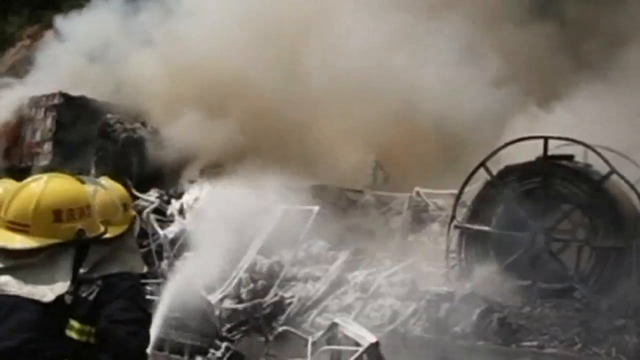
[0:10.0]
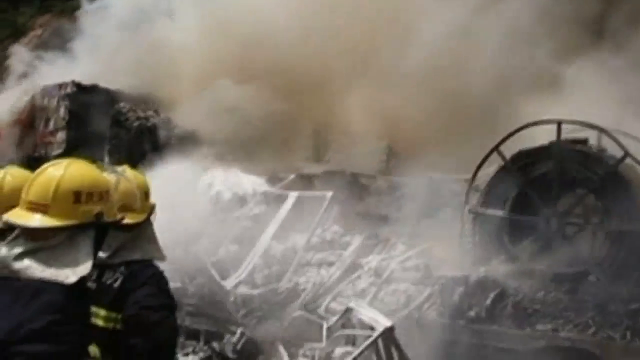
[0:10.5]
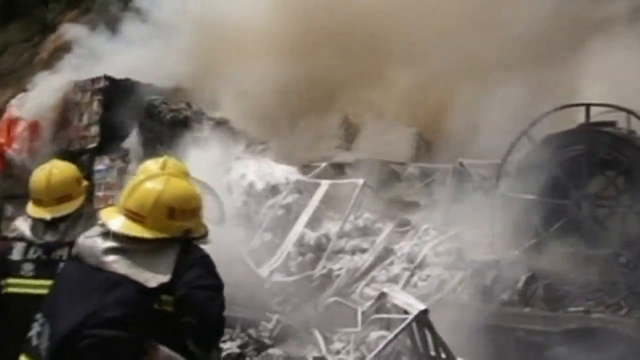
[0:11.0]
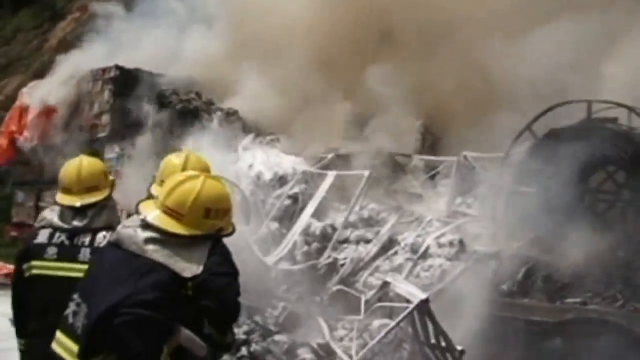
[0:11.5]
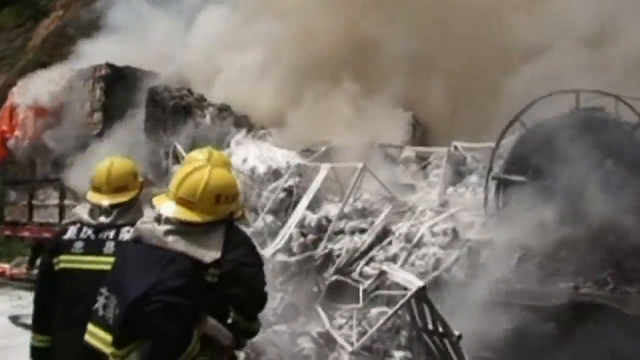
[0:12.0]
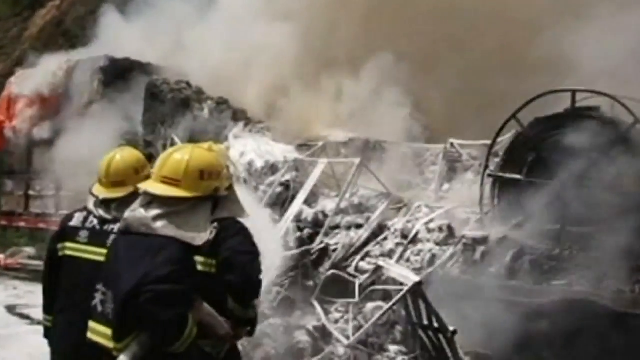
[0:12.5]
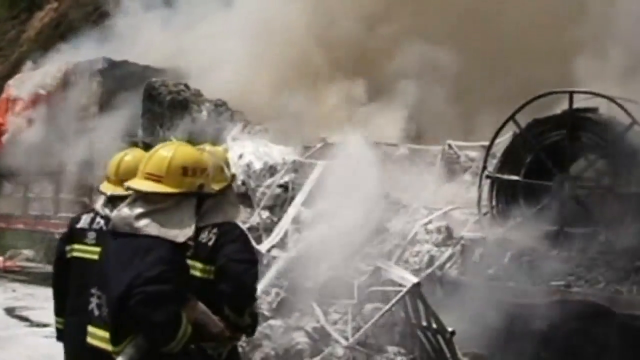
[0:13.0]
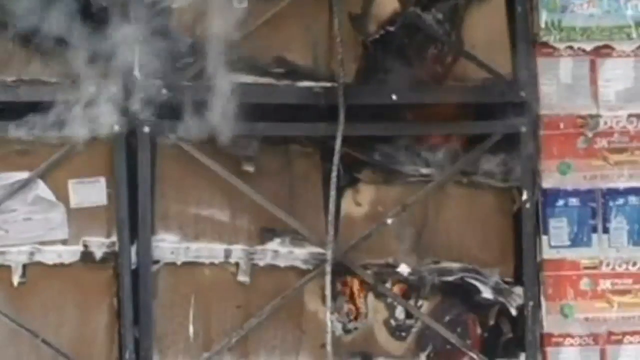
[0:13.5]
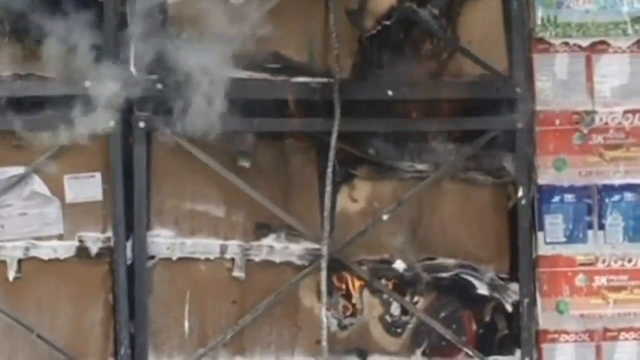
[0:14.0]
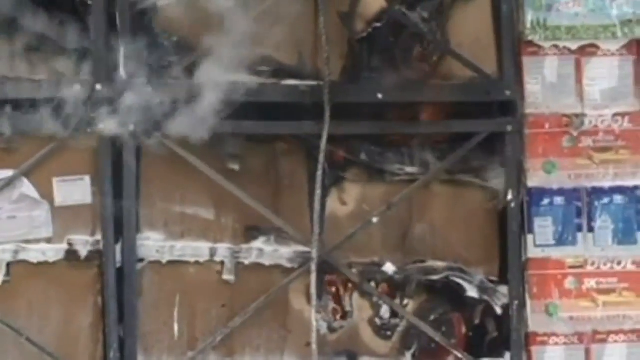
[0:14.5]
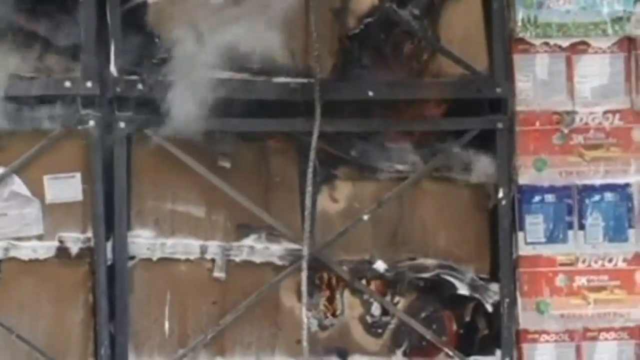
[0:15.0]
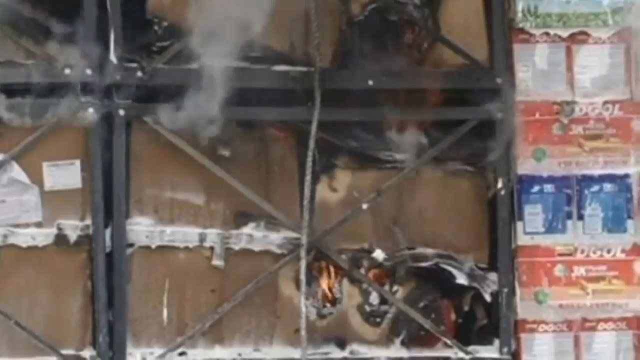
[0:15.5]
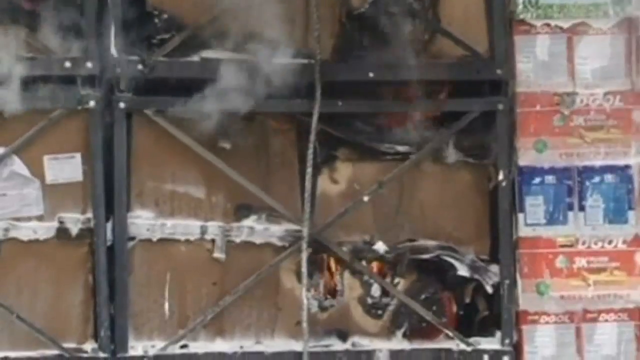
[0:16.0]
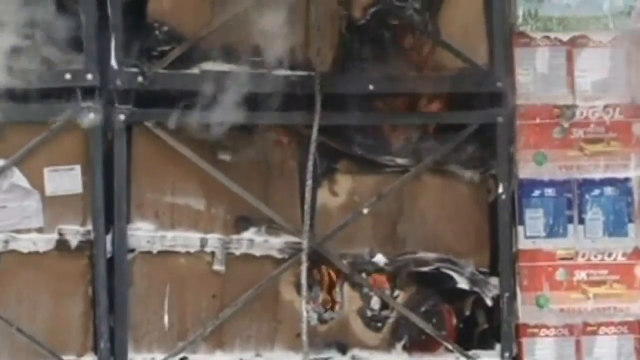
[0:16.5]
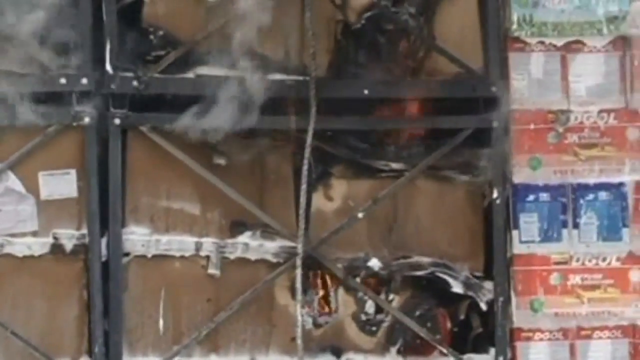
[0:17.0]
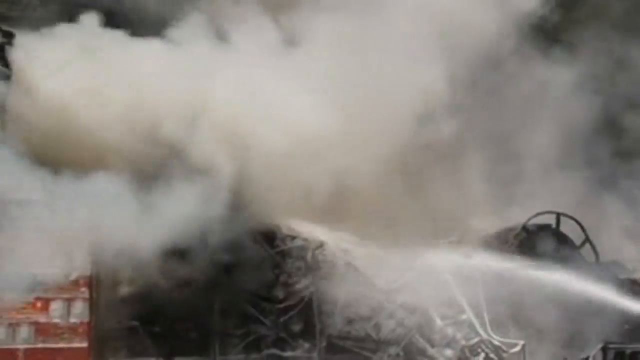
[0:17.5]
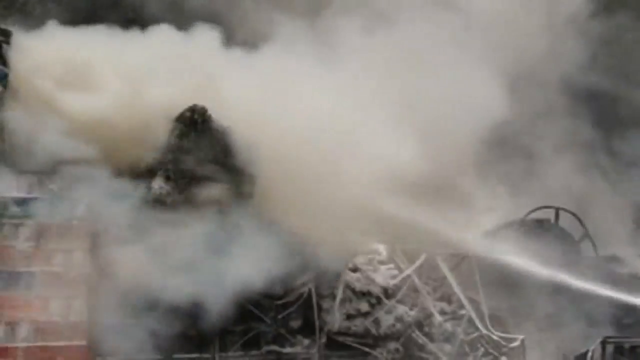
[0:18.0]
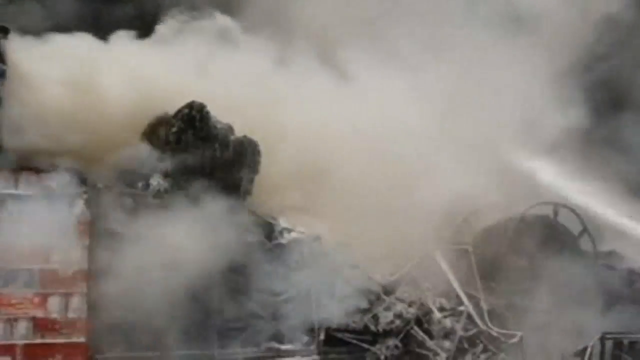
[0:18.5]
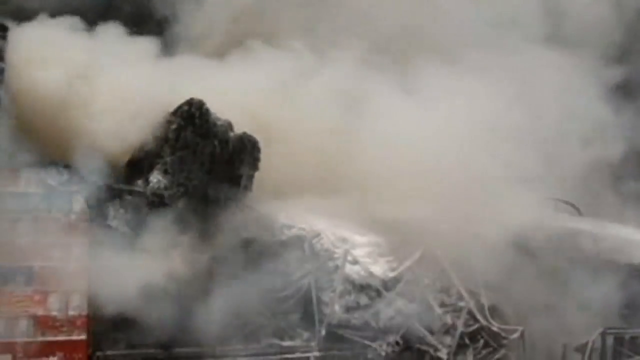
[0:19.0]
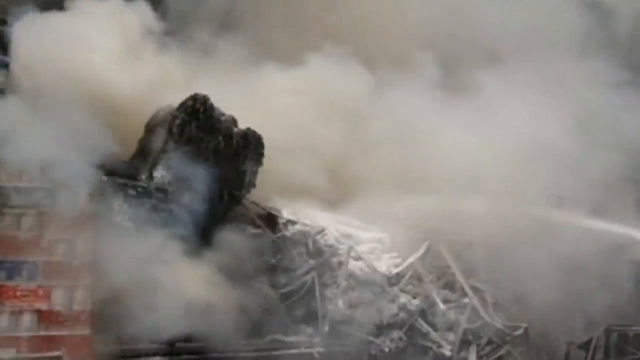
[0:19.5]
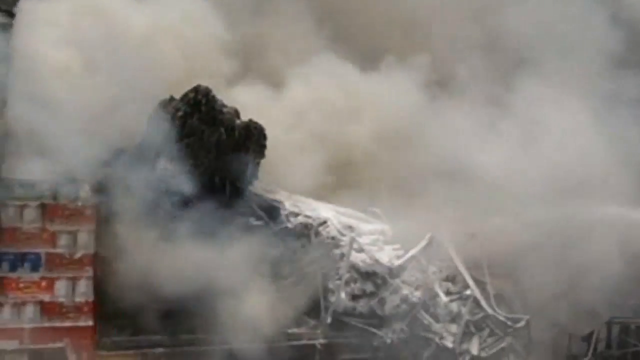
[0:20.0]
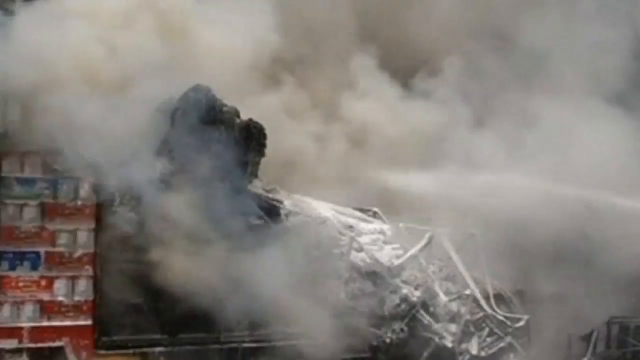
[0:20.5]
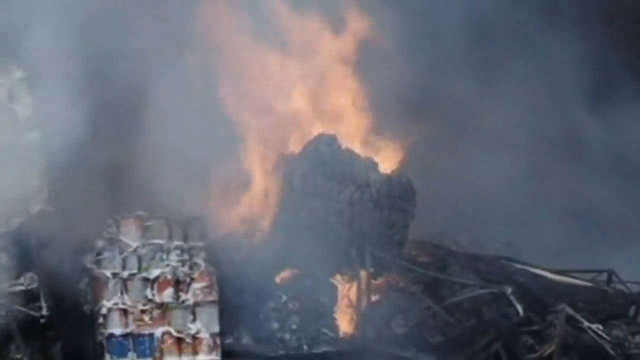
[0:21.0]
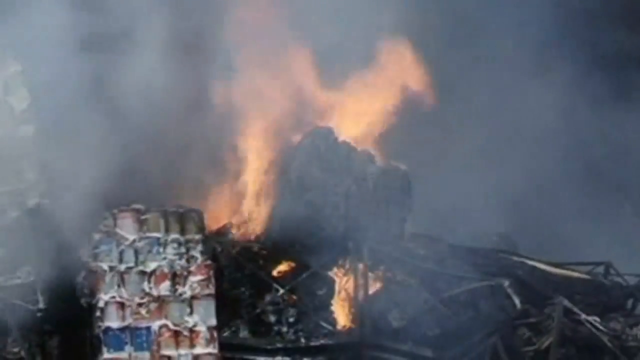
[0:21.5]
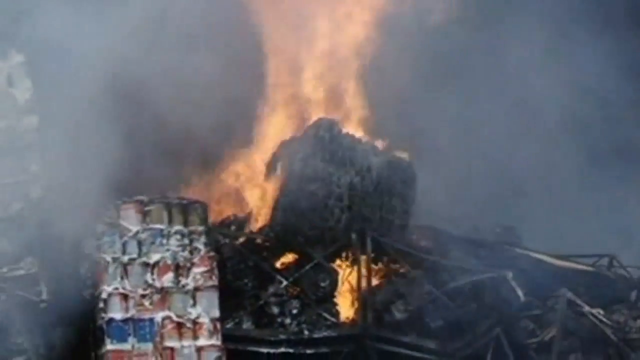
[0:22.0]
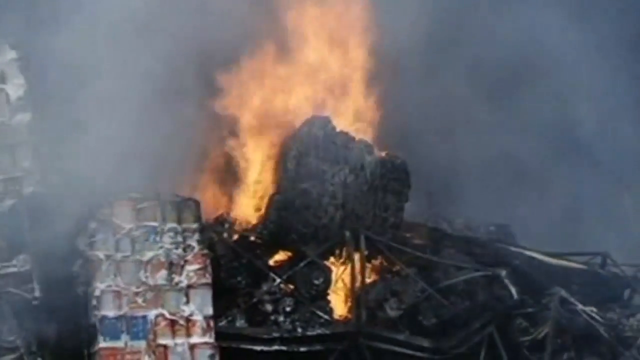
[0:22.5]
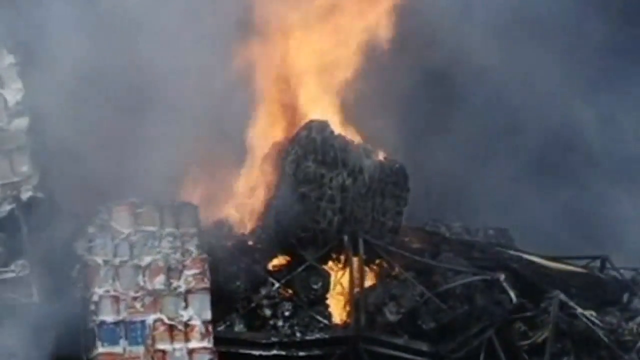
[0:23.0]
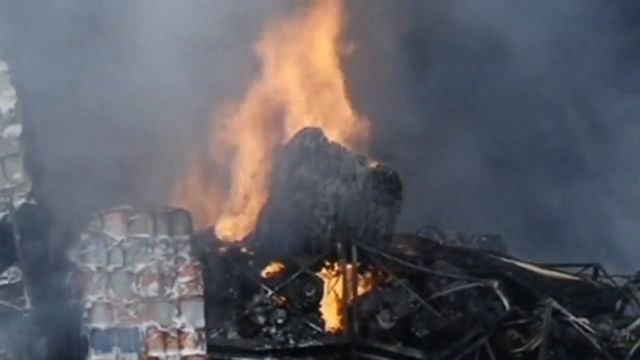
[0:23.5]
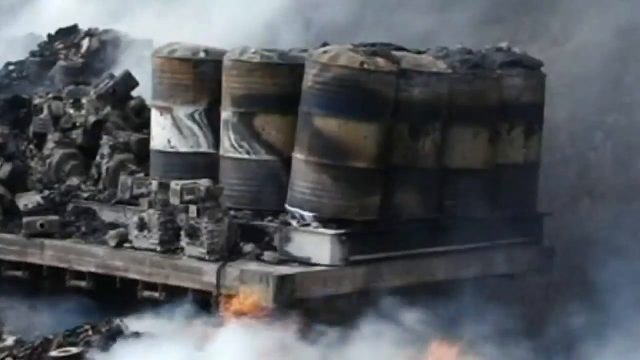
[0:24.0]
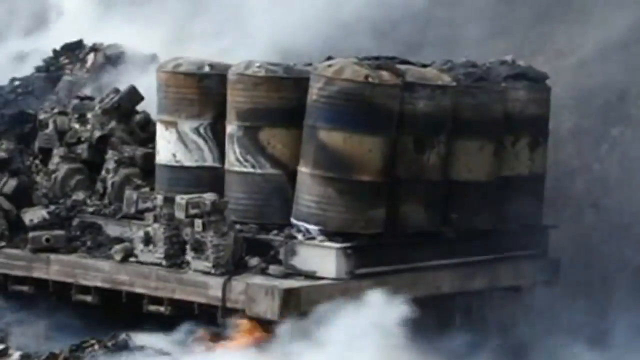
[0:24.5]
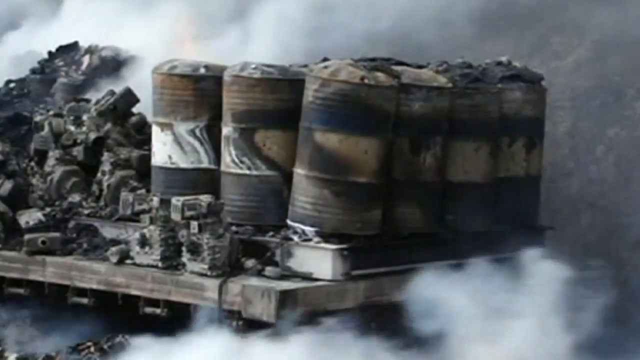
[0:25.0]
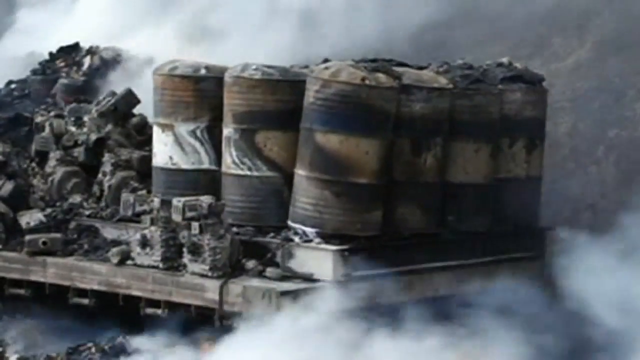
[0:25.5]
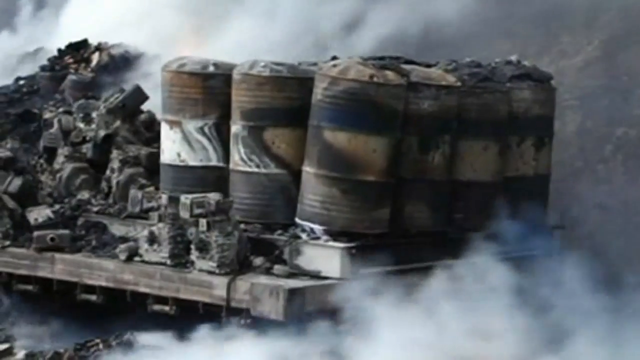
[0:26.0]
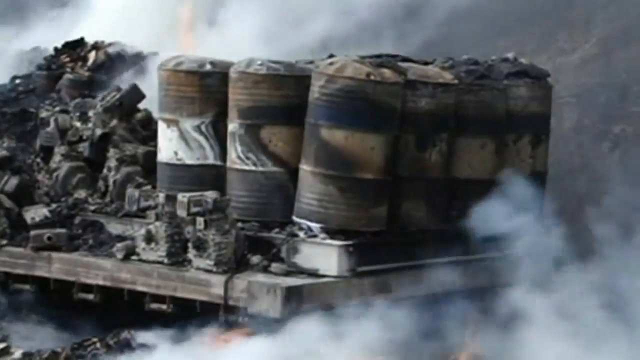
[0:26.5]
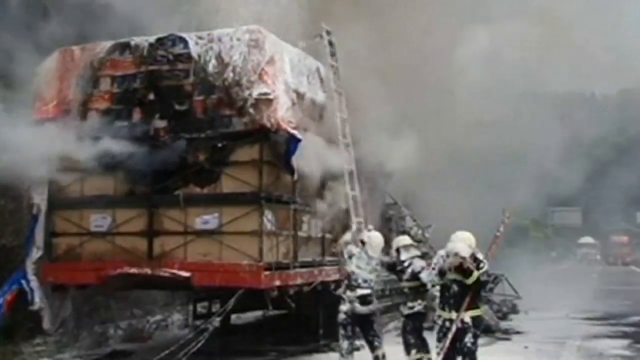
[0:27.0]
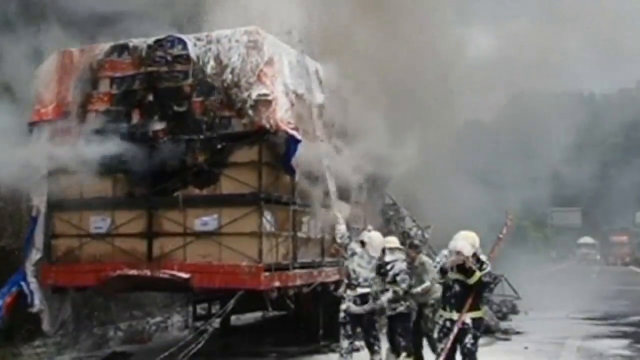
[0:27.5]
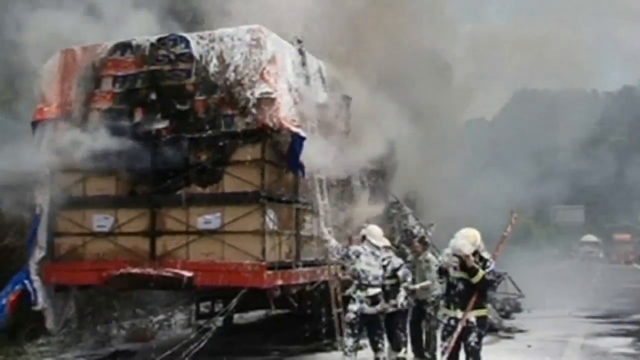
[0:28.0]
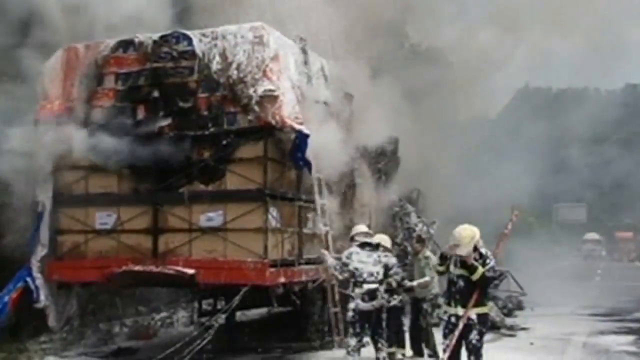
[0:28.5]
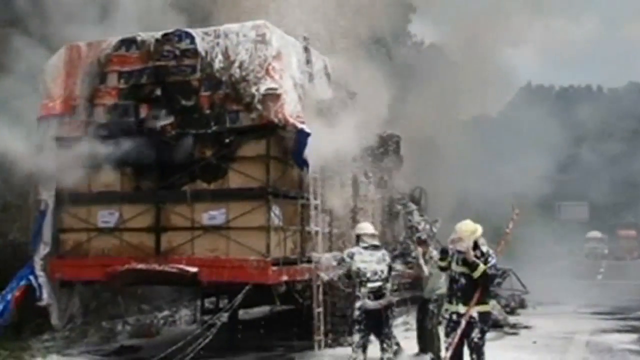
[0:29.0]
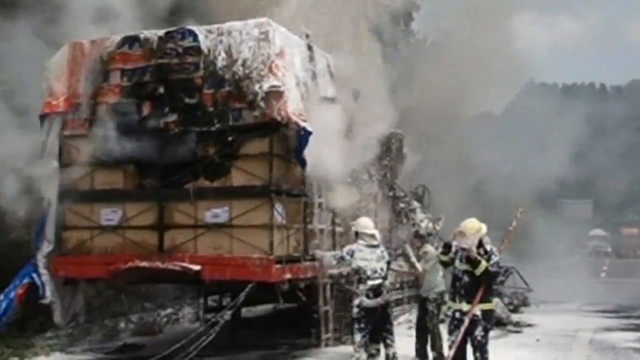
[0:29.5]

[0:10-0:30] More firemen appear from a different angle, a closer-up view in which they spray at the vehicle with all the items on it, and a lot of smoke rises from it. The view switches to a close-up of some boxes on it, with some smoke coming out and a few flames in the bottom right of the boxes. Another angle shows a lot of smoke moving in the wind as they hose it down. Next comes an image of a burnt area that caught fire, with a big flame coming up and some smoke over top. Another shot shows what looks like a bunch of barrels on top of the back of the truck, with a lot of smoke at the top left and bottom right of the screen. Another angle shows the back area of the truck with a bunch of boxes on top. White powder is everywhere, covering the people, as they put a ladder up to the top of it, with smoke everywhere.